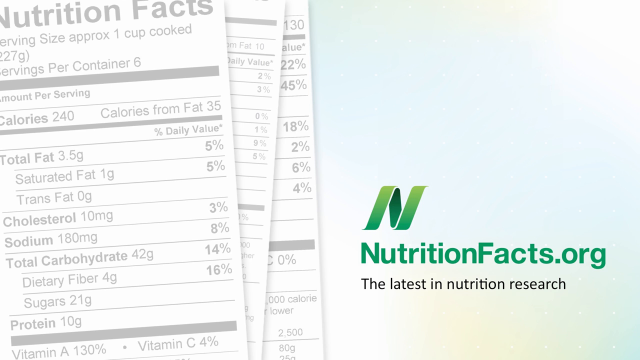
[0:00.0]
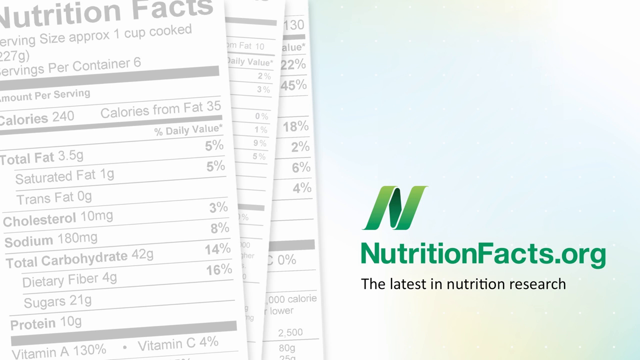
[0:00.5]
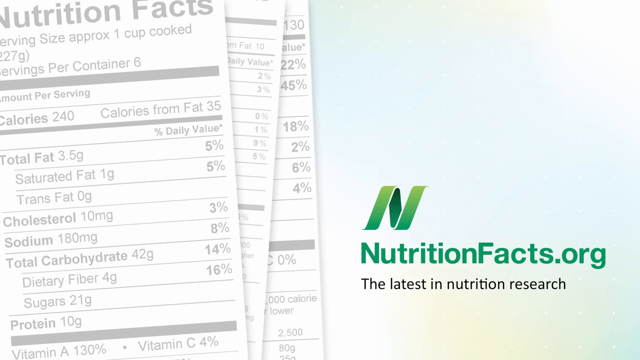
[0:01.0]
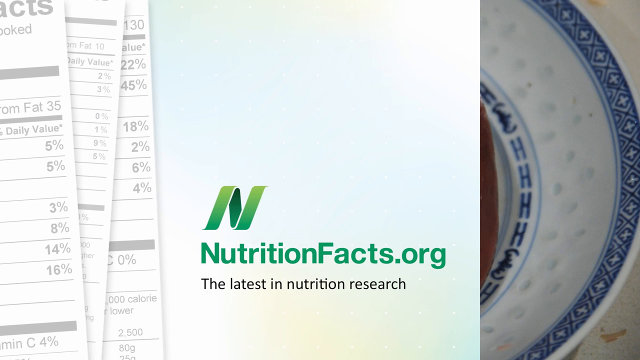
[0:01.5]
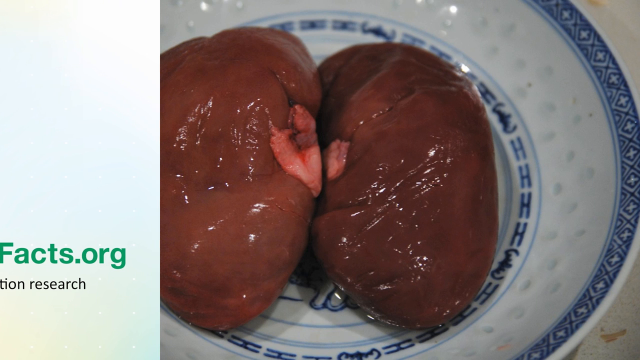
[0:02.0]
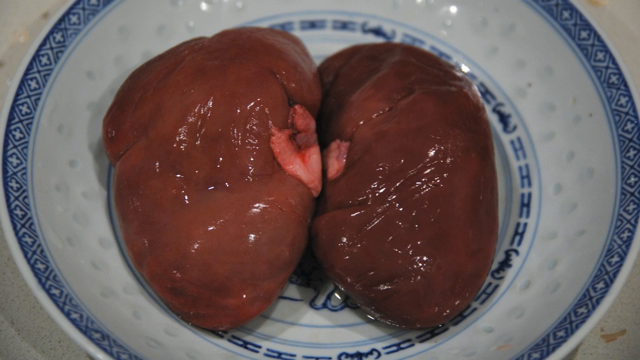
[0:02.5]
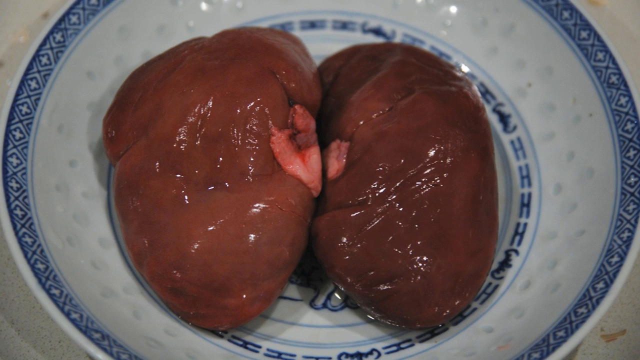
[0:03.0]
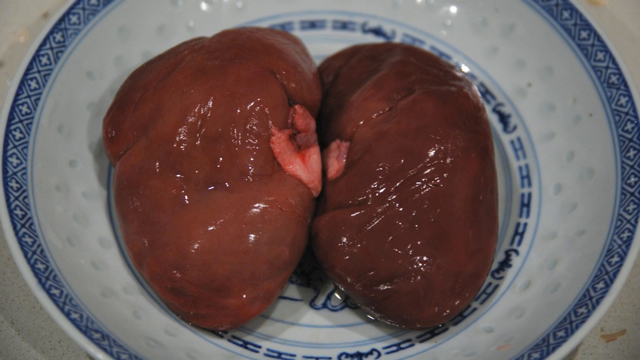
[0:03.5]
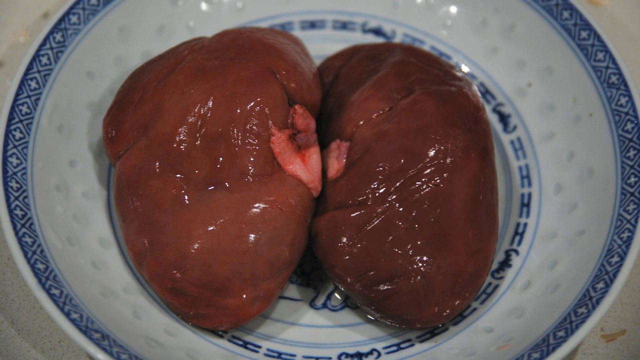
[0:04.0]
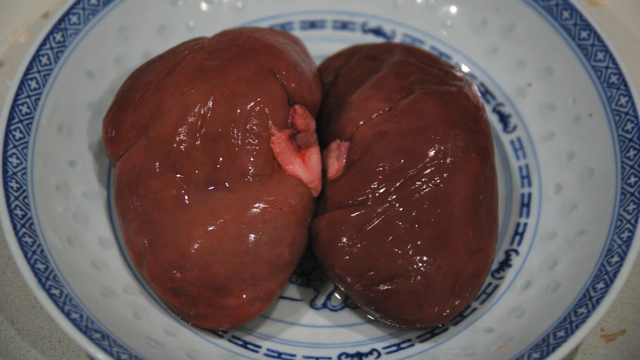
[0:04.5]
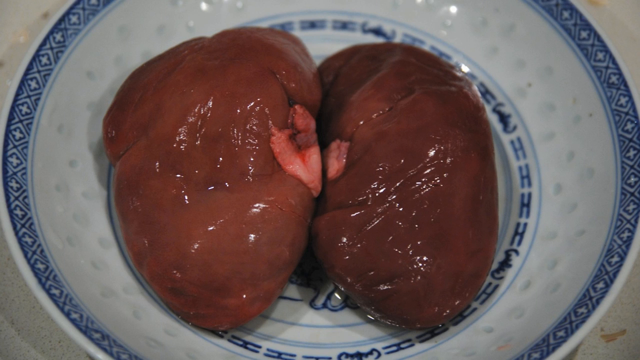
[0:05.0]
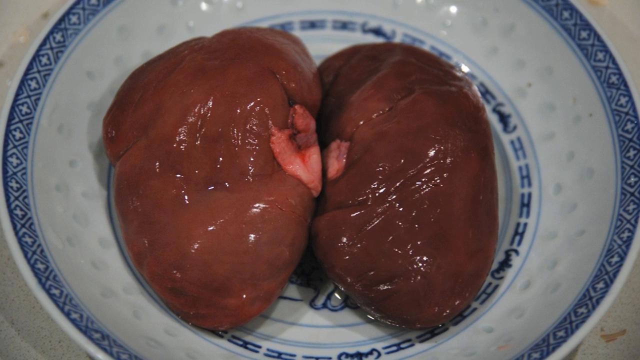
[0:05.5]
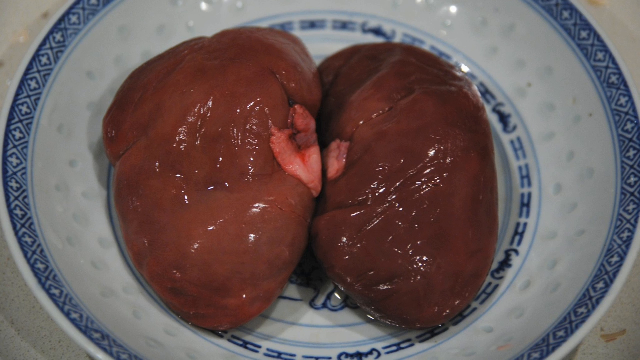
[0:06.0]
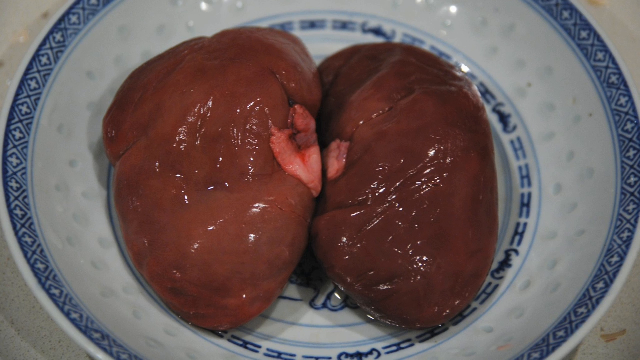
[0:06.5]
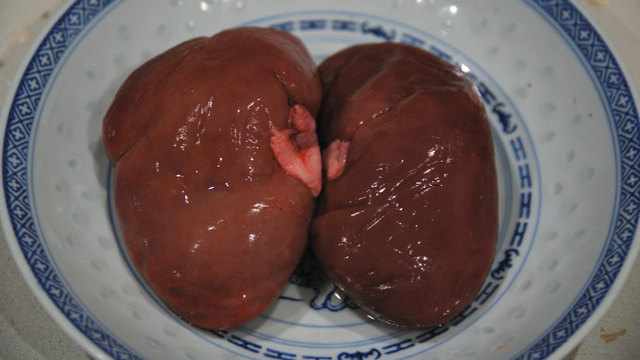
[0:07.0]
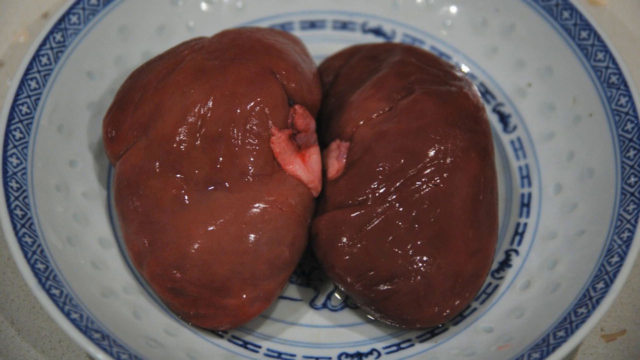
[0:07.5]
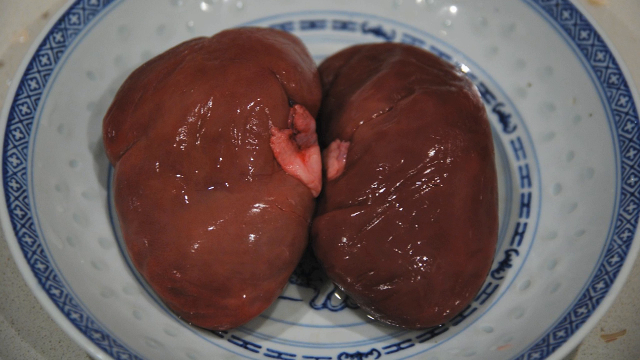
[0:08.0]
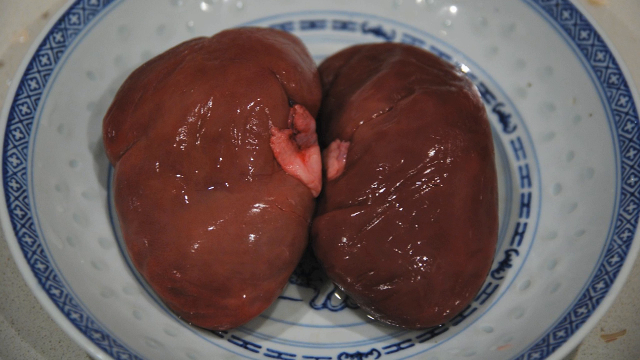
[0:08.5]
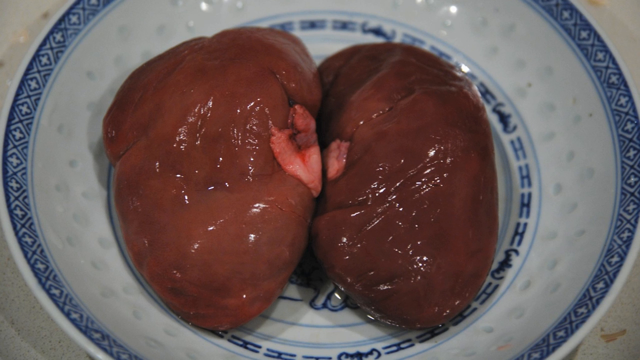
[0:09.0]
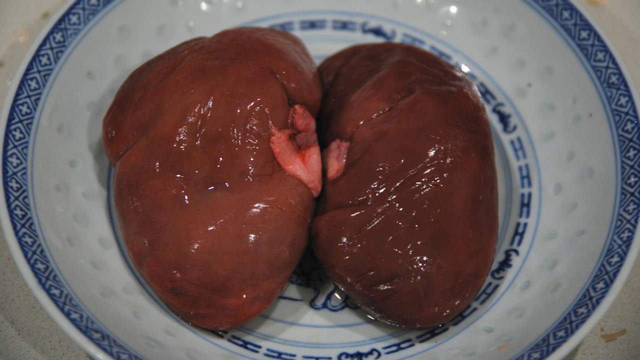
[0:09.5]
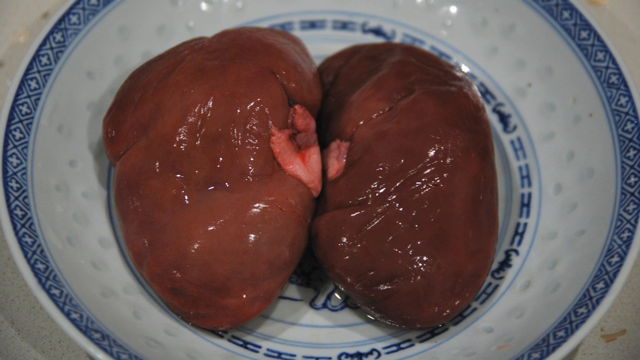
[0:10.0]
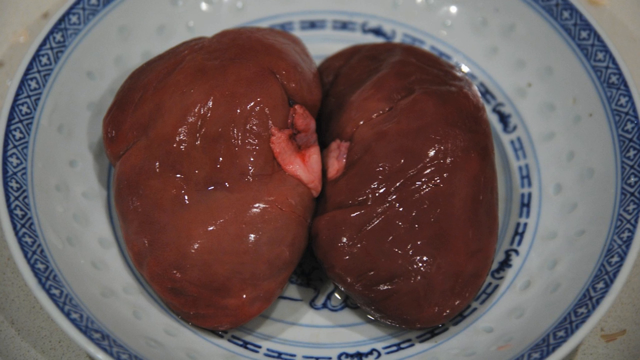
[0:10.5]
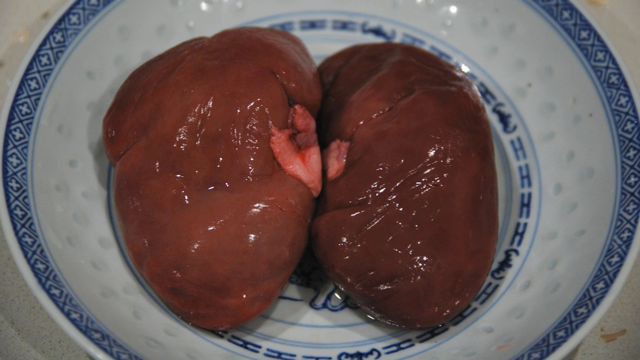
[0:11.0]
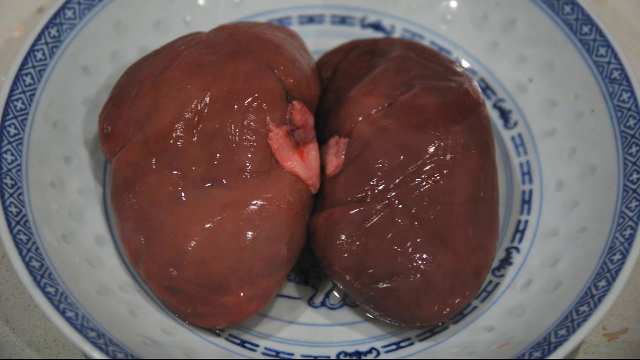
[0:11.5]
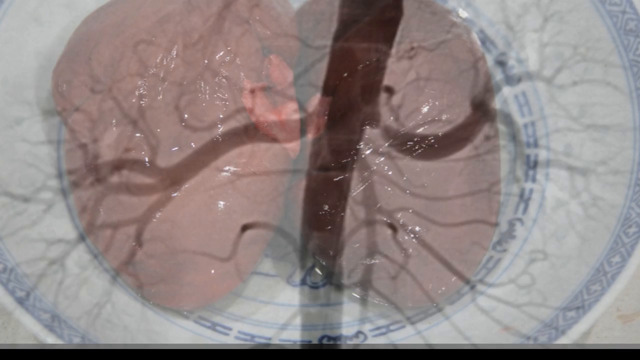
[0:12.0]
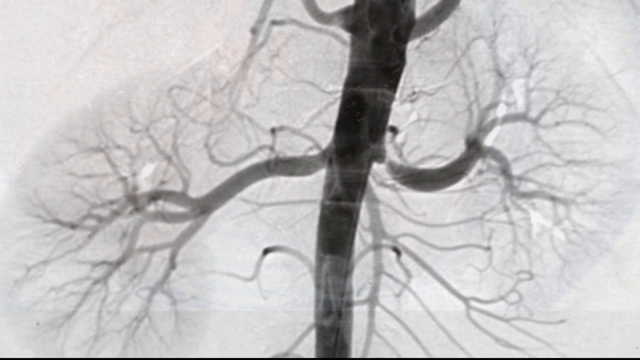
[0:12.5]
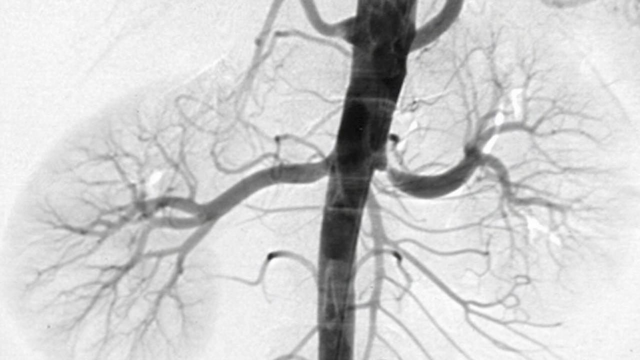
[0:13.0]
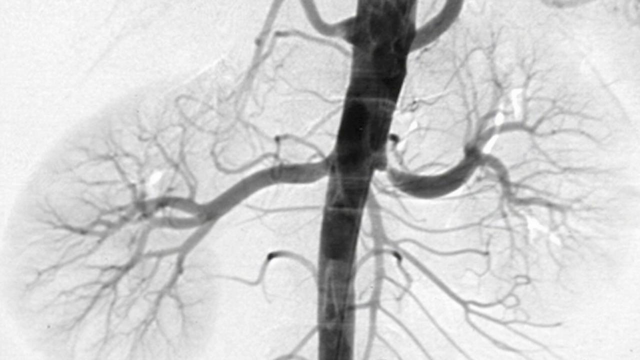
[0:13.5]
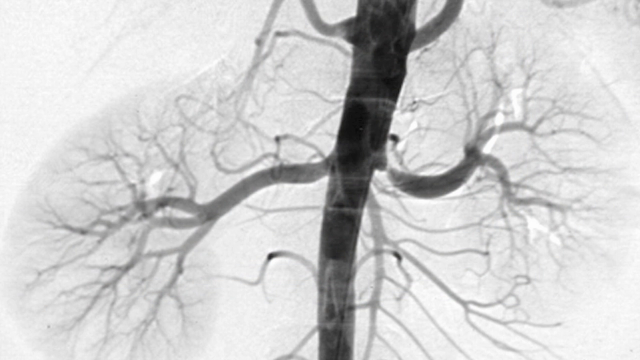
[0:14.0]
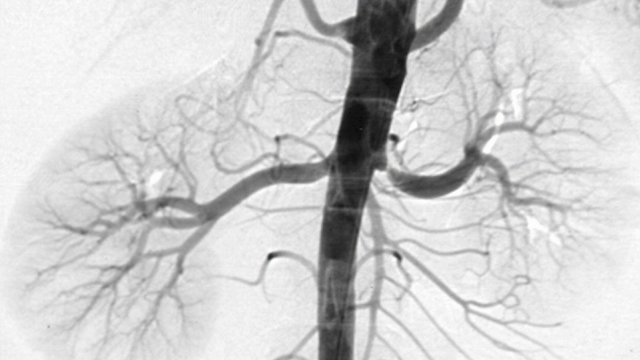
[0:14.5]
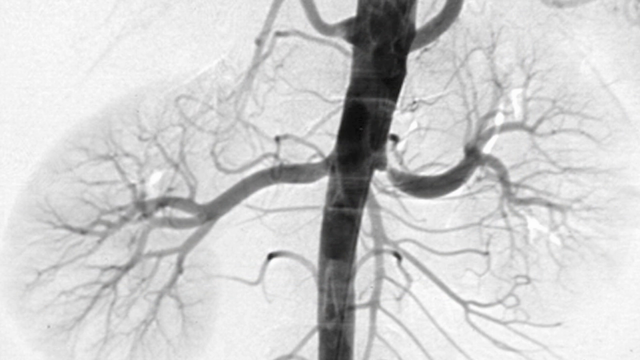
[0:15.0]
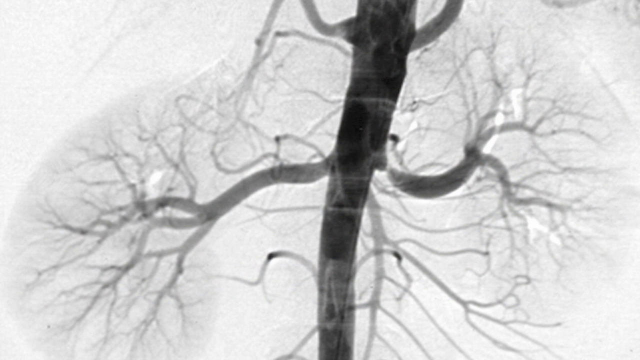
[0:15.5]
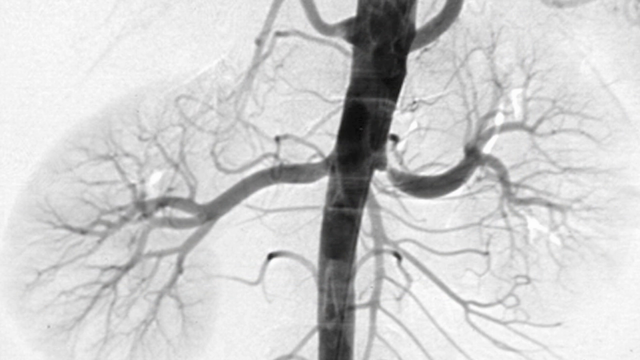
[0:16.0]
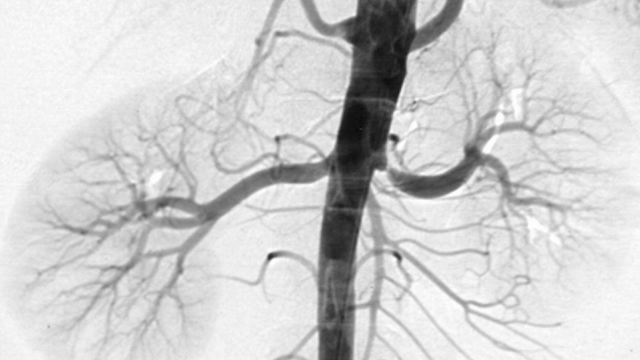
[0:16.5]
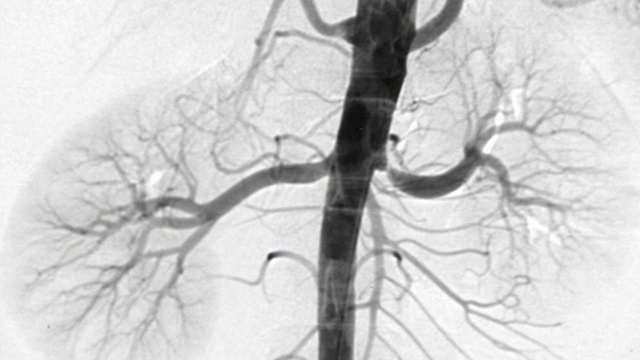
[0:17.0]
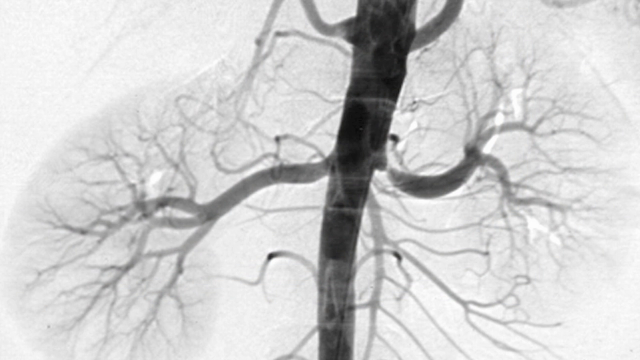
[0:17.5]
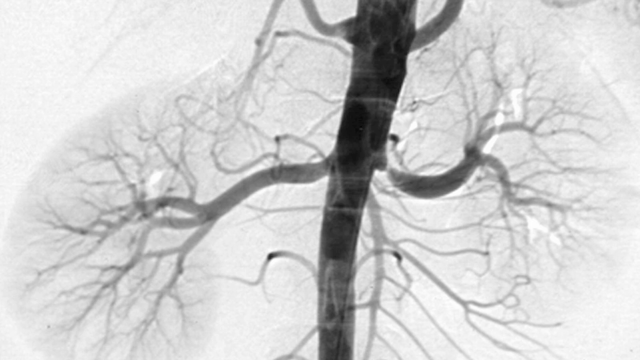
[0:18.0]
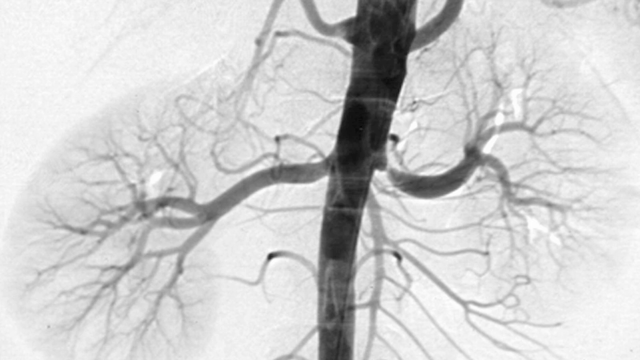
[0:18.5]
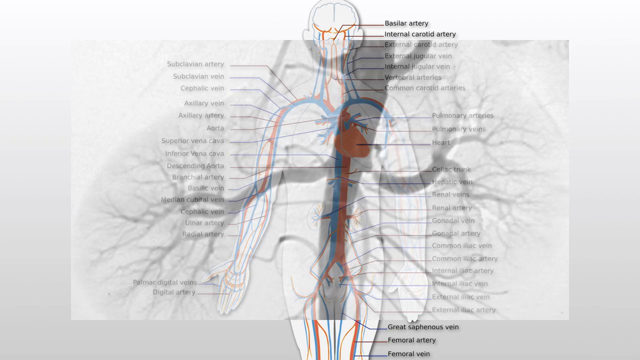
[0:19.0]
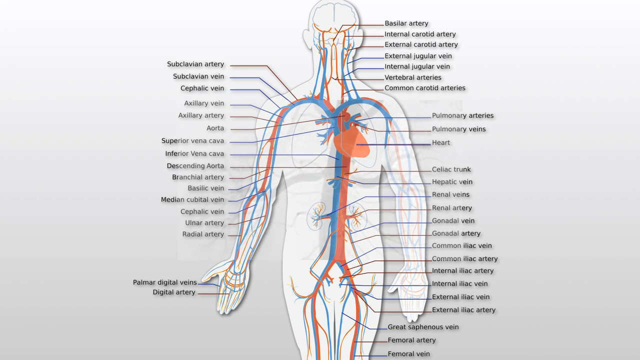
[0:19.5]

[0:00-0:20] The video opens with the title "nutritionfacts.org, the latest in nutrition research" in green writing, along with a logo with a twisted ribbon, also in green. To the left, some nutrition labels are shown. Next, an Asian blue and white plate appears with two rather large organs on it; they may be two different organs. Then something like a CT scan of one of these organs shows what look like veins or arteries. The video moves to a picture of a male body in faint white and gray, with veins and arteries in red and blue on top of it. This detailed circulatory system covers the upper half of the body, from the groin to the brain. On the left-hand side, labels run from the subclavian artery all the way down to the digital artery, and on the right side from the basilar artery down to the external iliac artery.